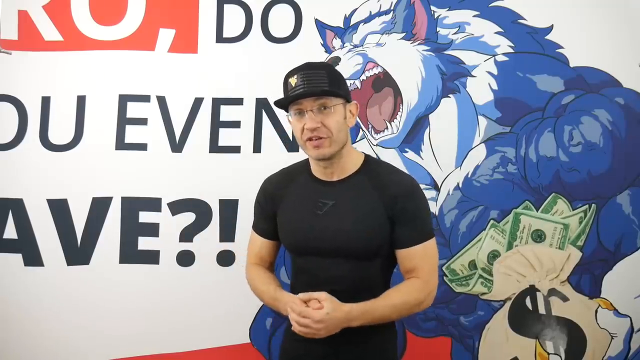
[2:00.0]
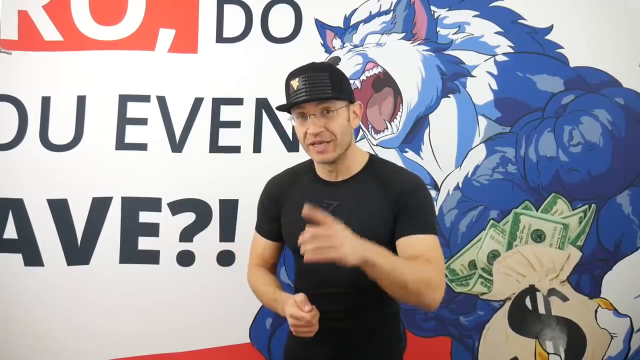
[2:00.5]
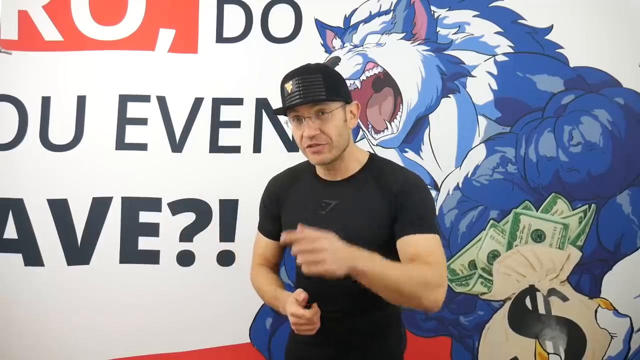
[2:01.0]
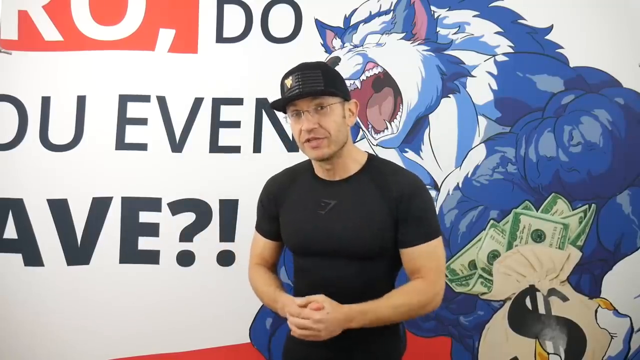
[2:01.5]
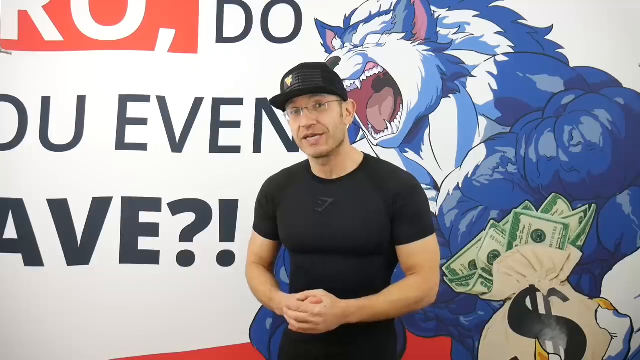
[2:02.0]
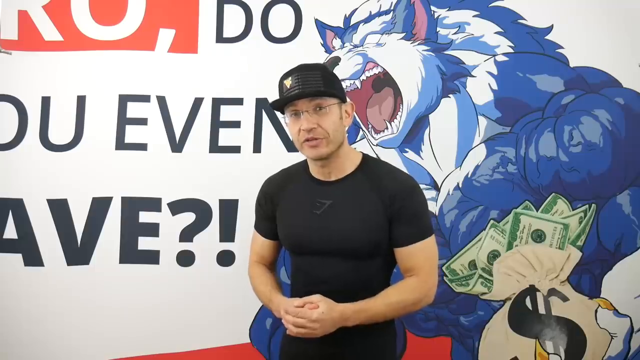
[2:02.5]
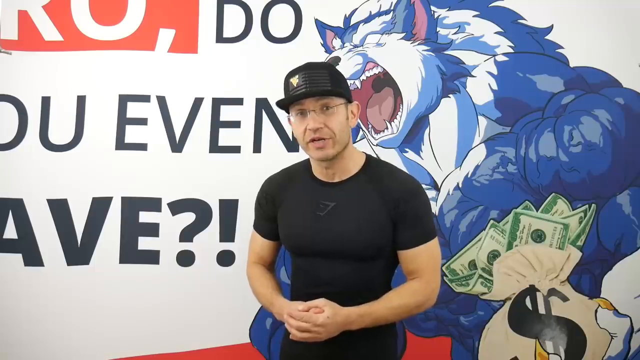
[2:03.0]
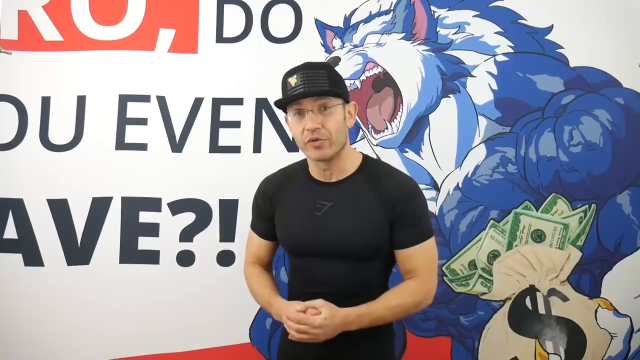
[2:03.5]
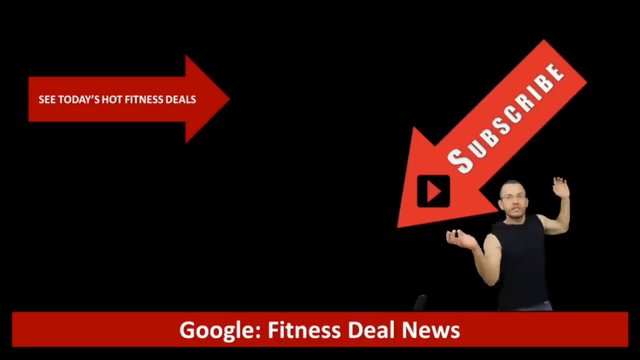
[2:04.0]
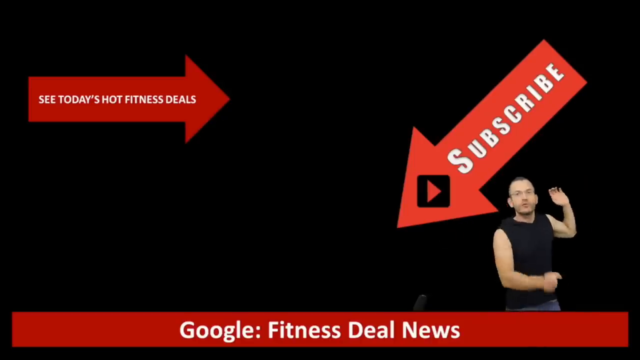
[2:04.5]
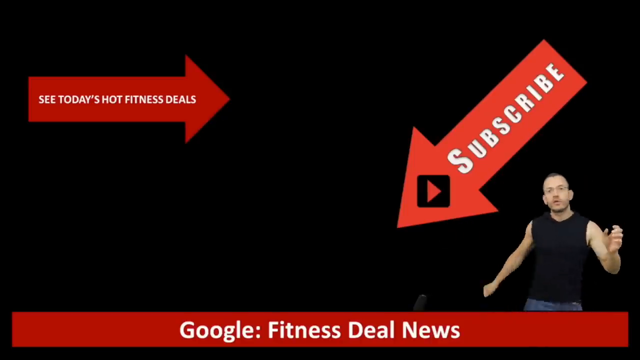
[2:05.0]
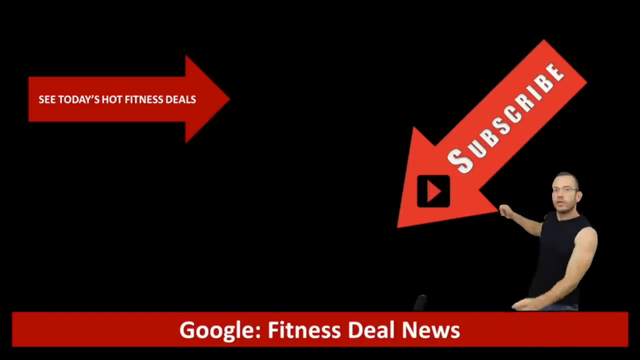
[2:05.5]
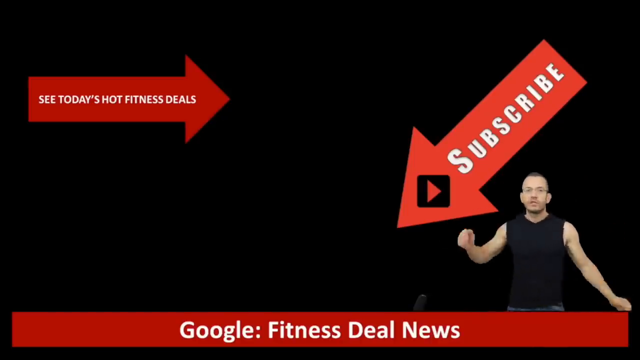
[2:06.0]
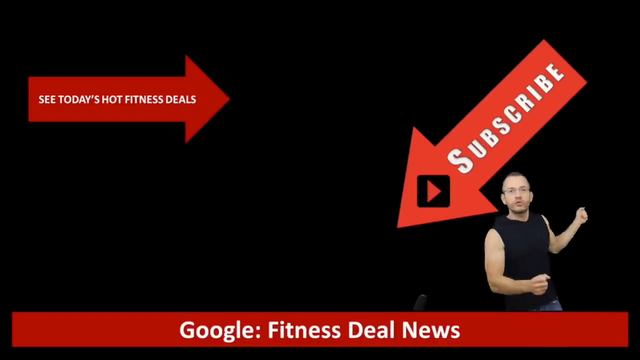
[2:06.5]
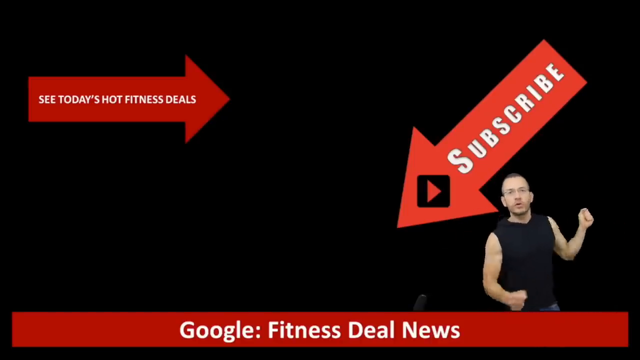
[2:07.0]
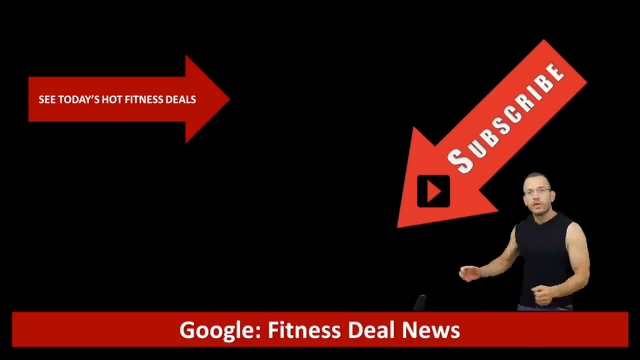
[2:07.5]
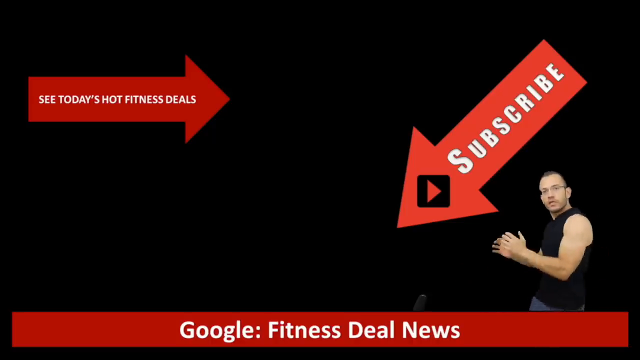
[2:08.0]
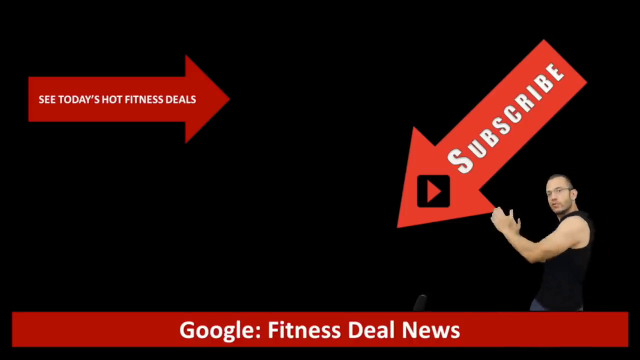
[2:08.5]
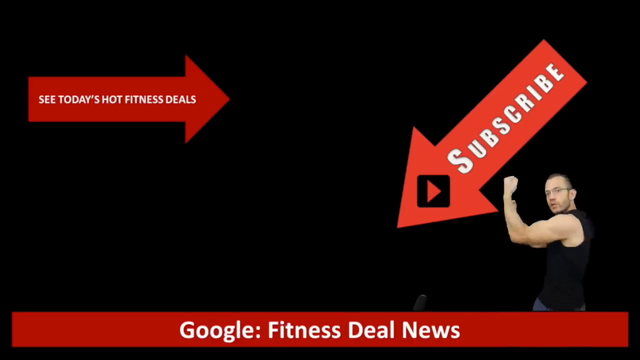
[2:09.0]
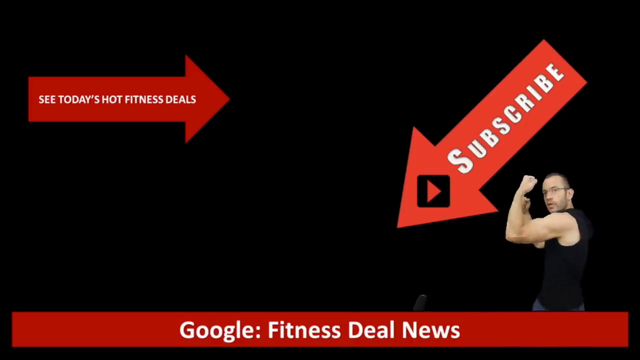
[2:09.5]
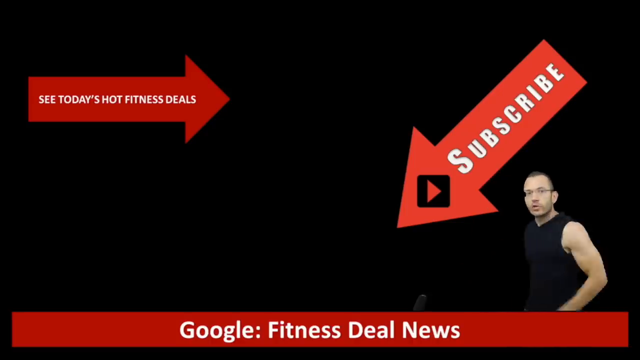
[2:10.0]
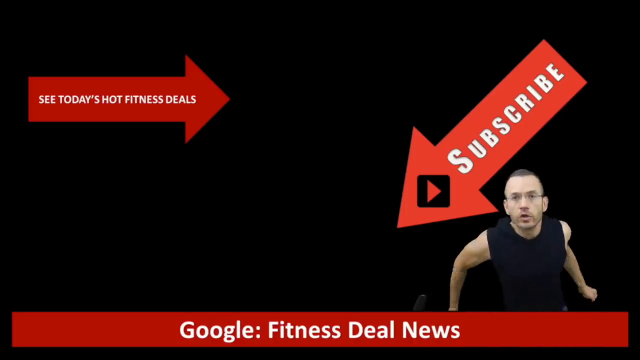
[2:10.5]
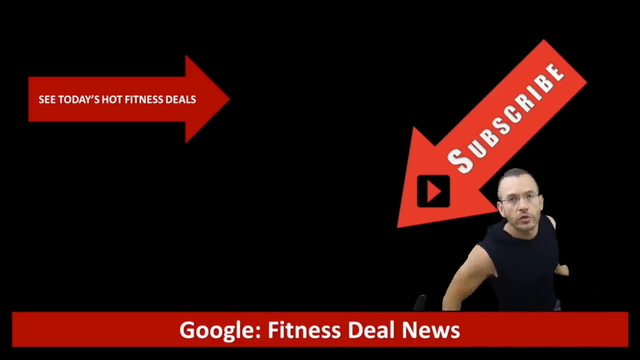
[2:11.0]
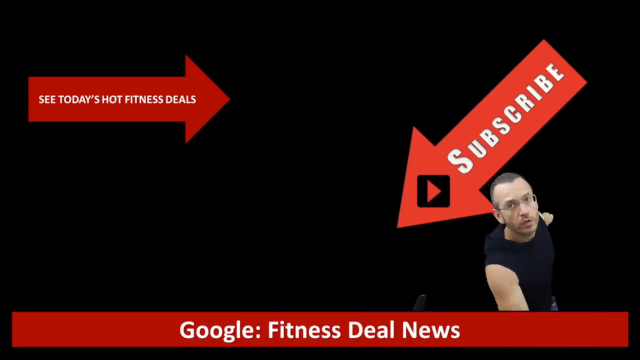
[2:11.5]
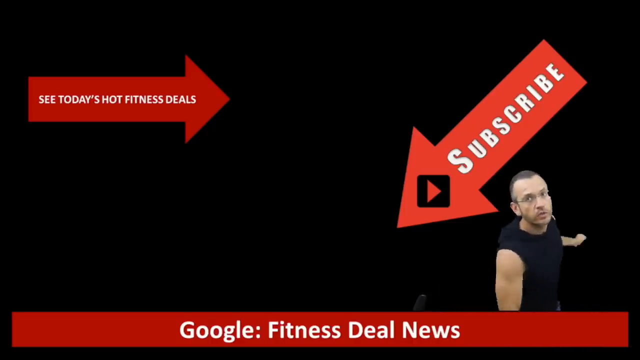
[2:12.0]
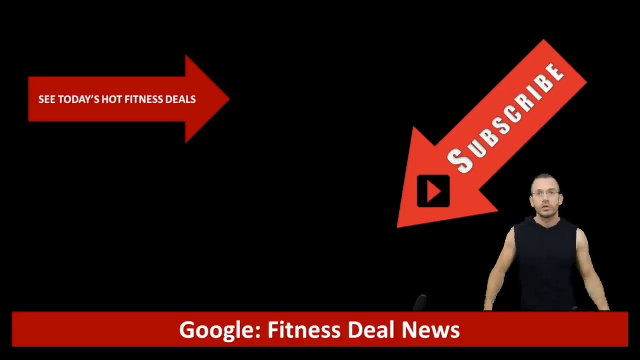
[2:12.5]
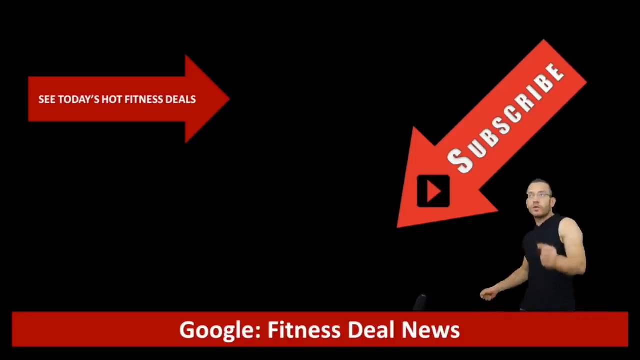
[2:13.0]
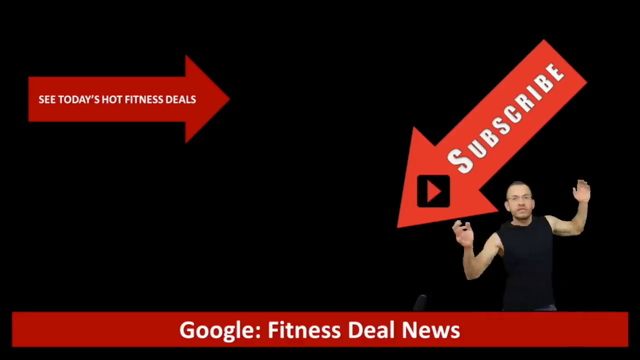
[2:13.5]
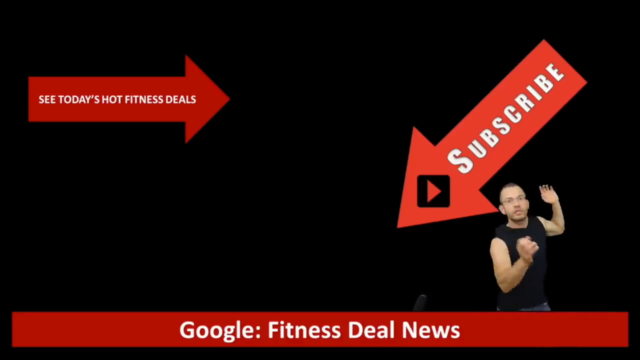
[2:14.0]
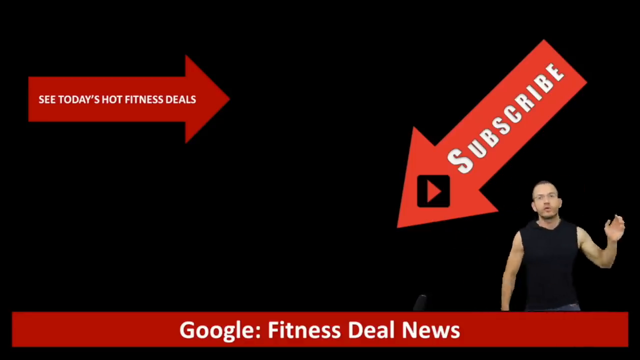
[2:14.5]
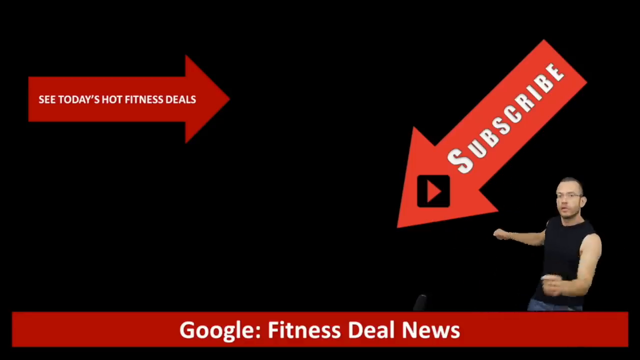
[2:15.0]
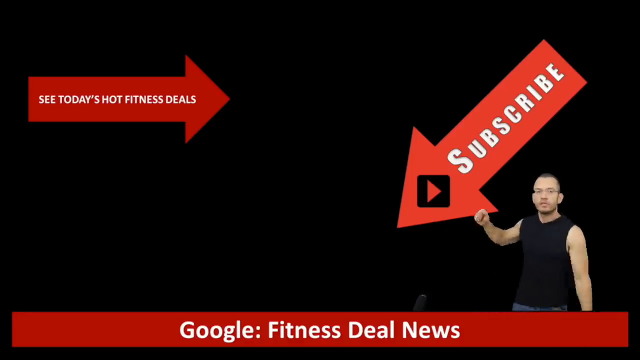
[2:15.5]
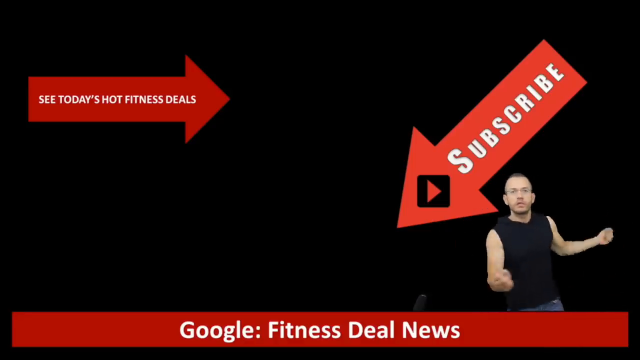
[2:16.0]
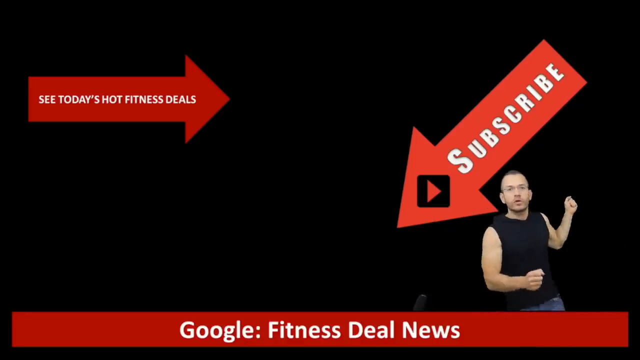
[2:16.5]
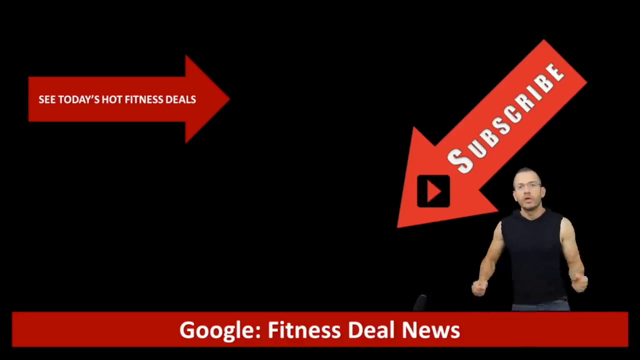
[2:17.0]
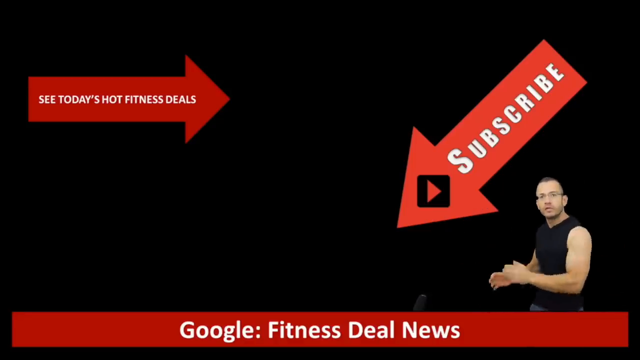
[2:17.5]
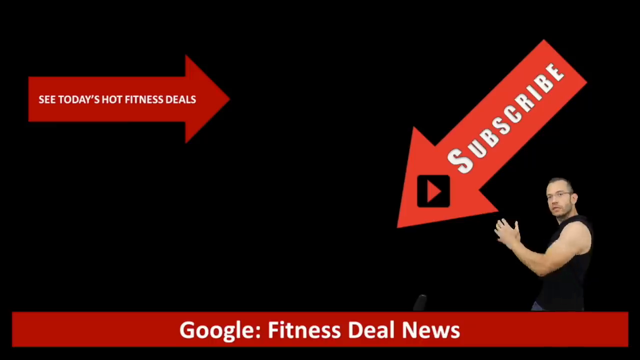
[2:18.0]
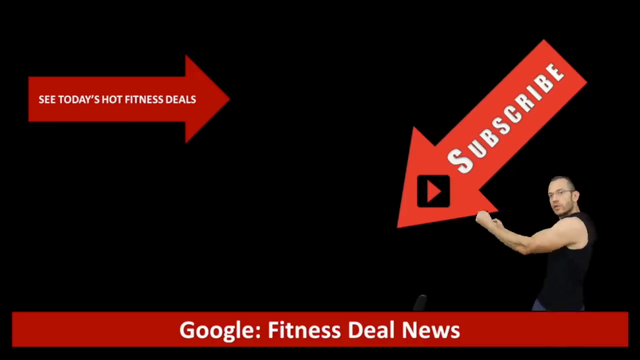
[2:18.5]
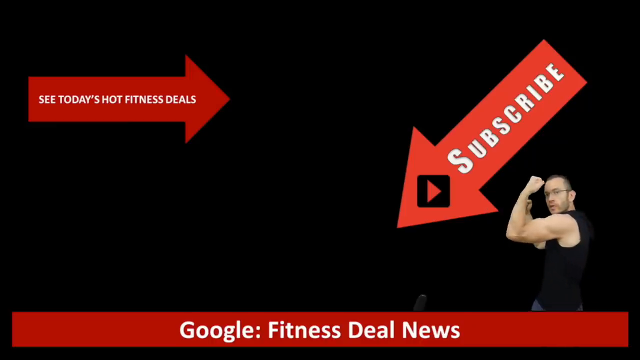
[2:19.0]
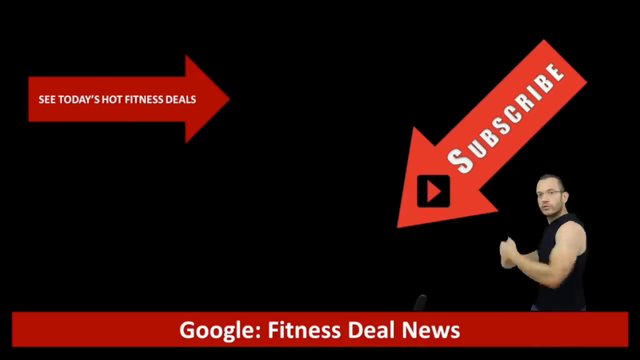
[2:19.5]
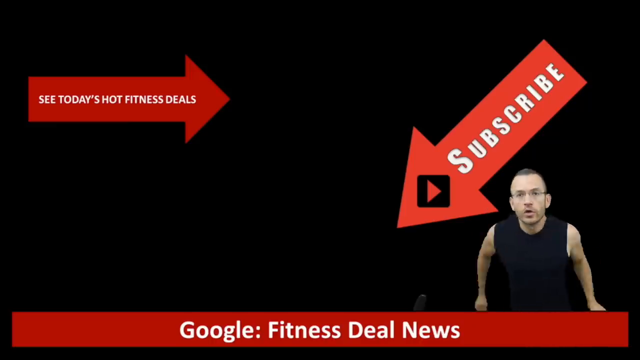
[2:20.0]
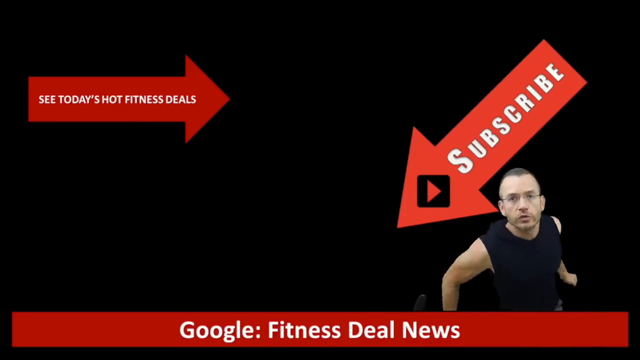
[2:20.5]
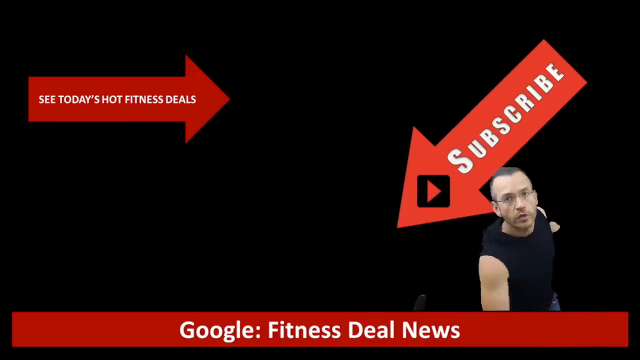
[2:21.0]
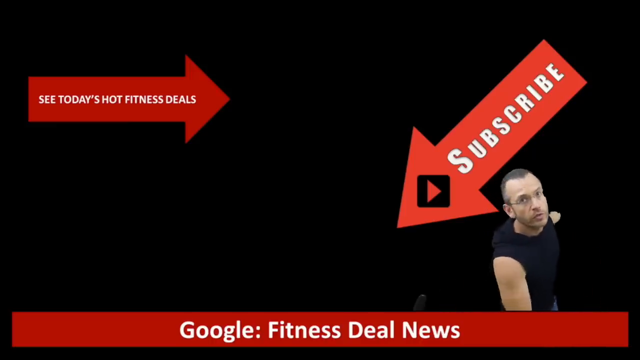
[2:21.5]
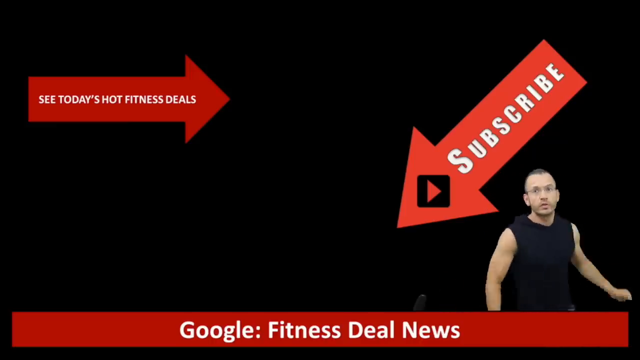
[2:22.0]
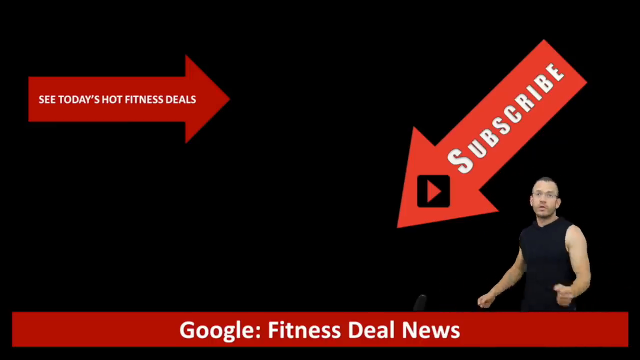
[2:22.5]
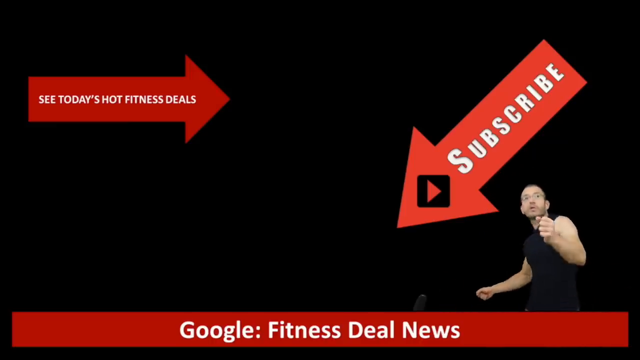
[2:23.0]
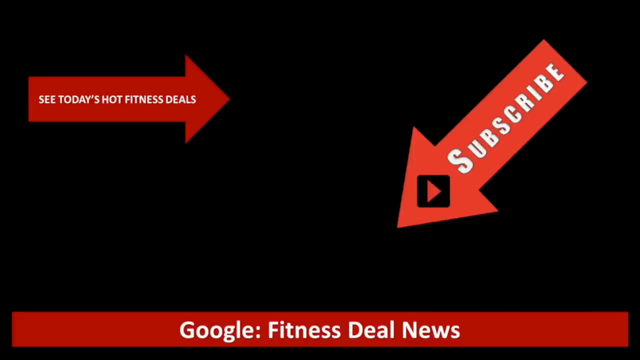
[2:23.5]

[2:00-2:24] A man in a short-sleeved black shirt and black hat stands in front of a backdrop with some words on the left and an illustration of a giant humanoid-like wolf on the right. The wolf is white and blue, growling fiercely, and holds a bag of money in its left hand. The man speaks to the screen briefly, and then an end card appears showing two red arrows. One is on the left and says "See today's hot fitness deals"; the other is on the right, pointing downward, and says "Subscribe." A video of the man is at the bottom of the screen, and across the bottom of the screen a red bar says "Google Fitness Deal News." The man at the bottom of the screen is shown dancing, clapping and waving his arms around.